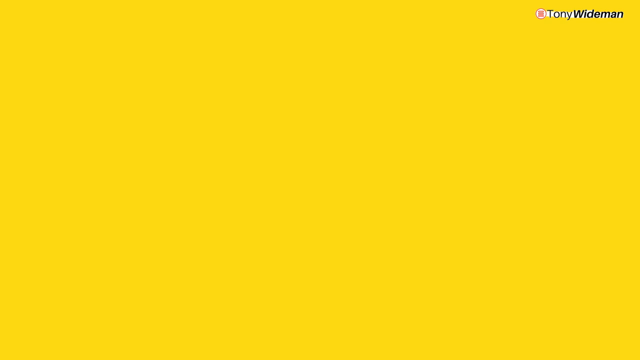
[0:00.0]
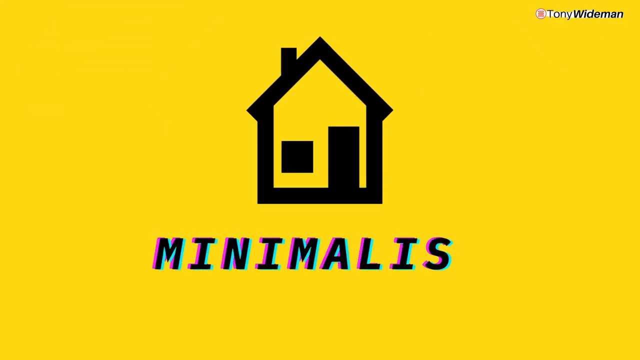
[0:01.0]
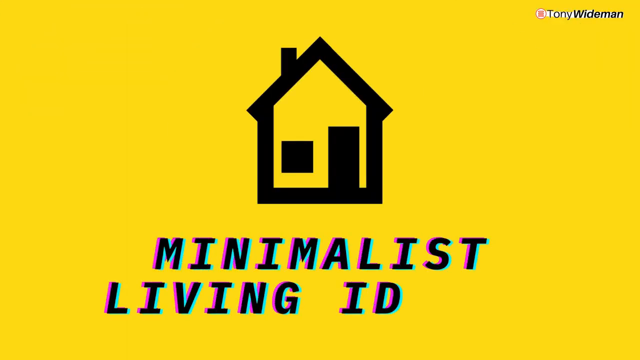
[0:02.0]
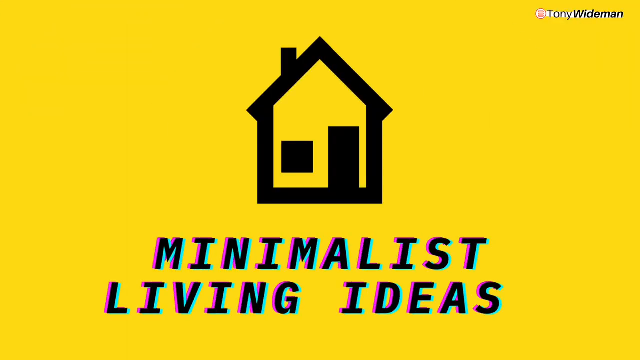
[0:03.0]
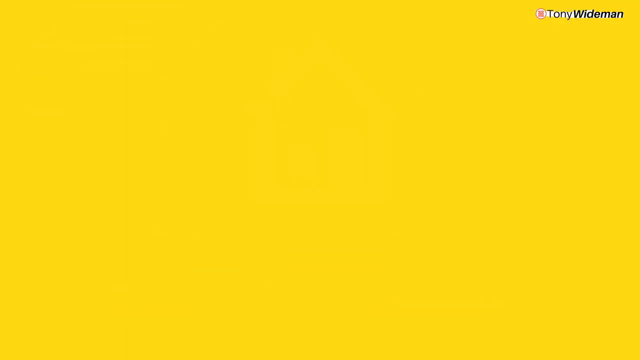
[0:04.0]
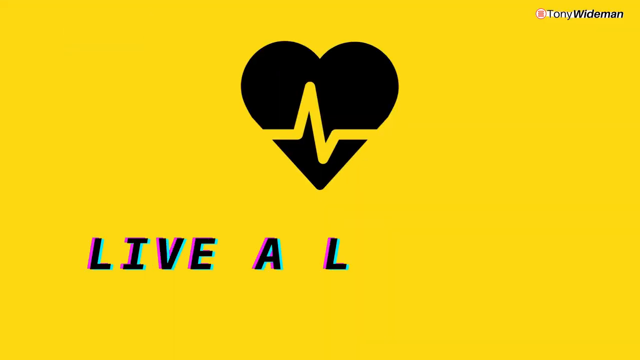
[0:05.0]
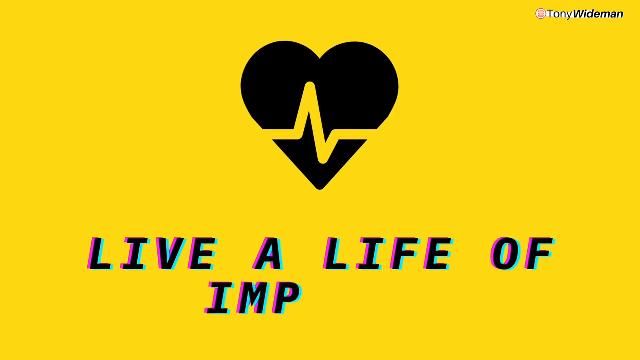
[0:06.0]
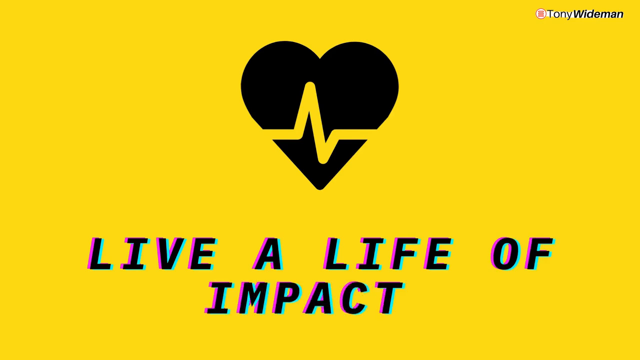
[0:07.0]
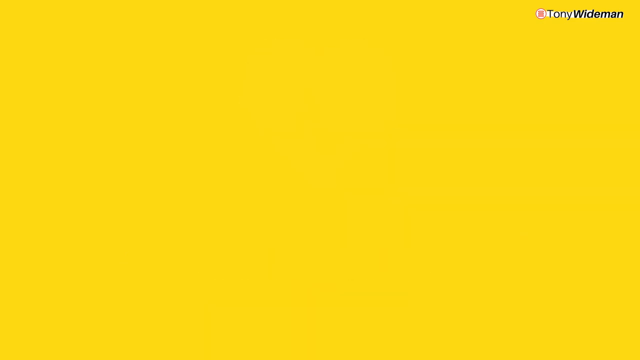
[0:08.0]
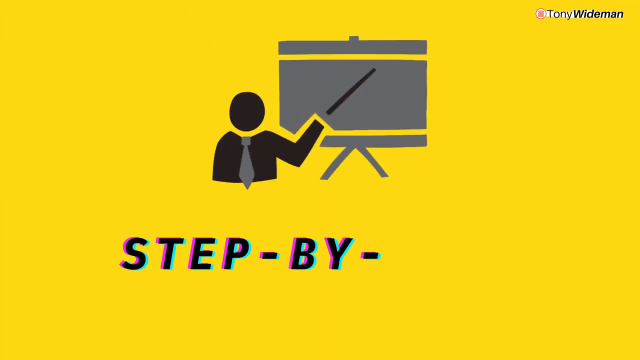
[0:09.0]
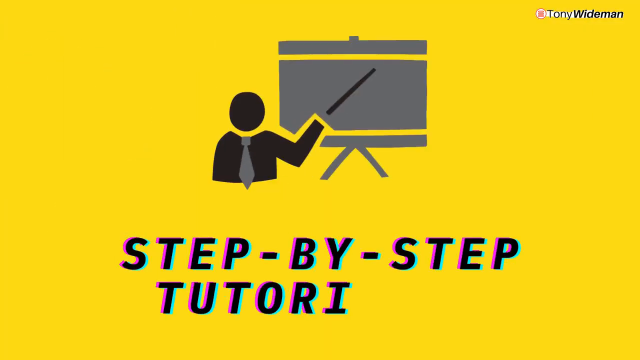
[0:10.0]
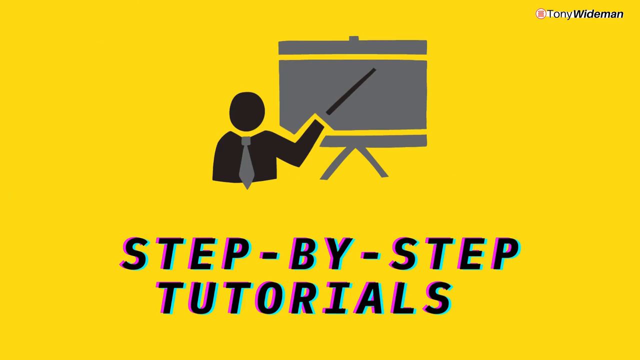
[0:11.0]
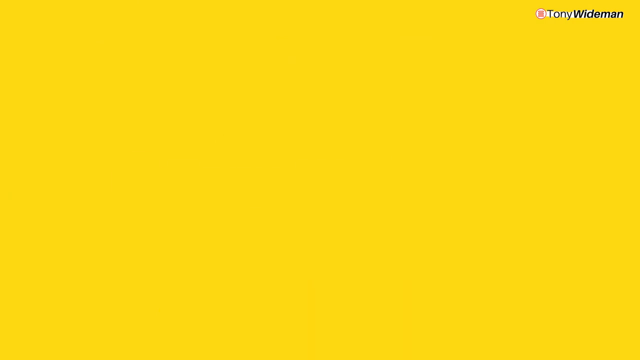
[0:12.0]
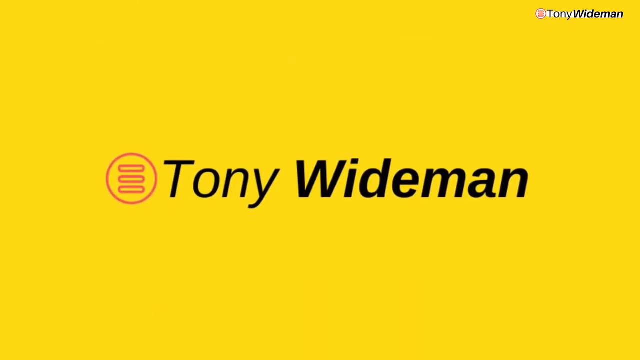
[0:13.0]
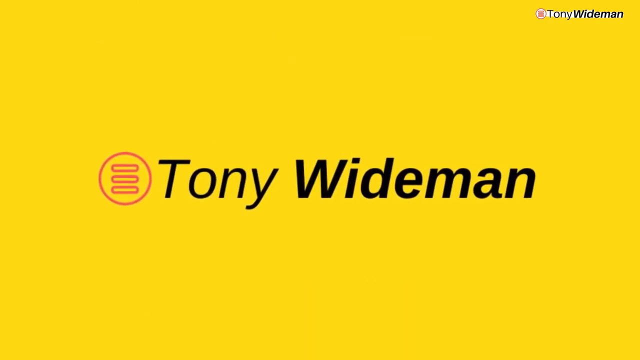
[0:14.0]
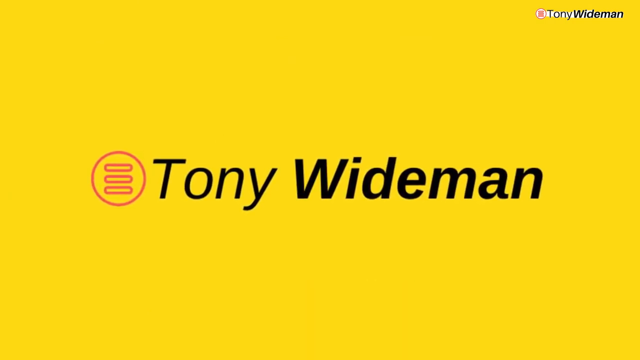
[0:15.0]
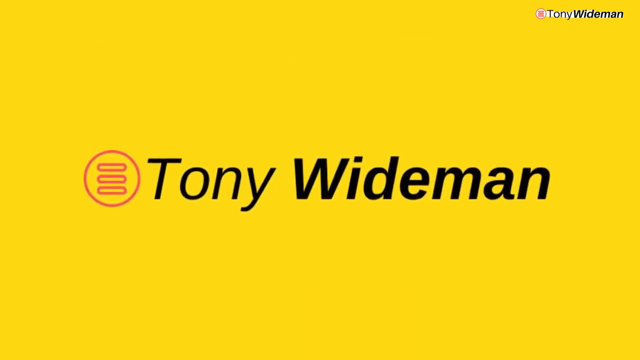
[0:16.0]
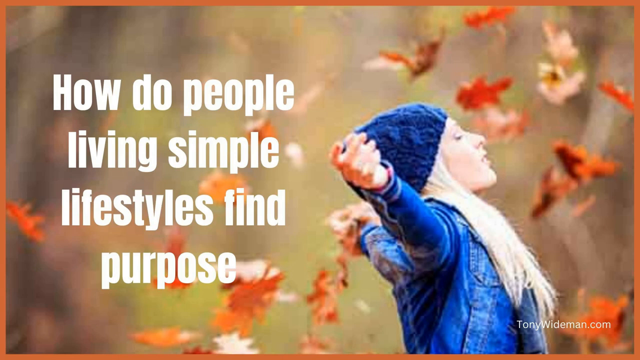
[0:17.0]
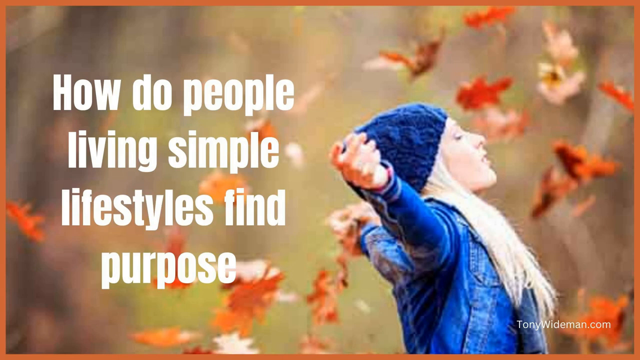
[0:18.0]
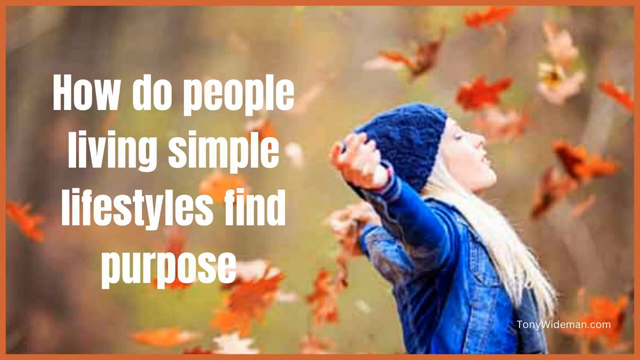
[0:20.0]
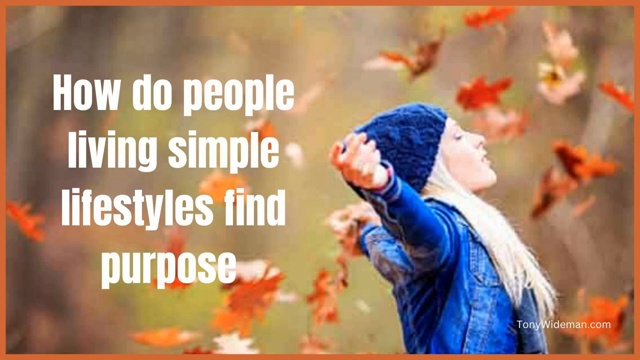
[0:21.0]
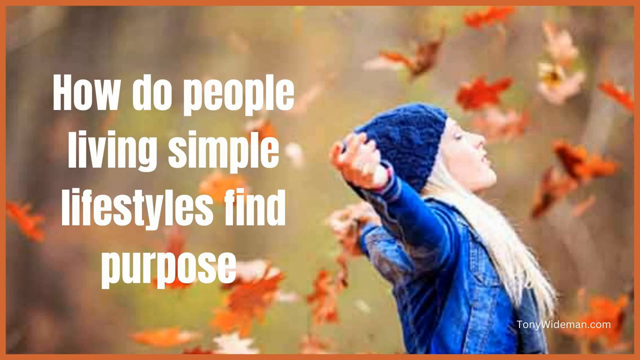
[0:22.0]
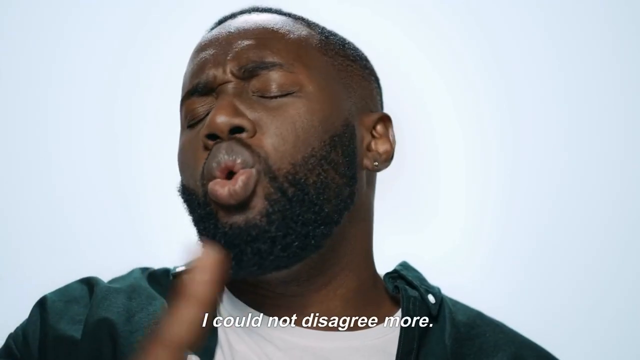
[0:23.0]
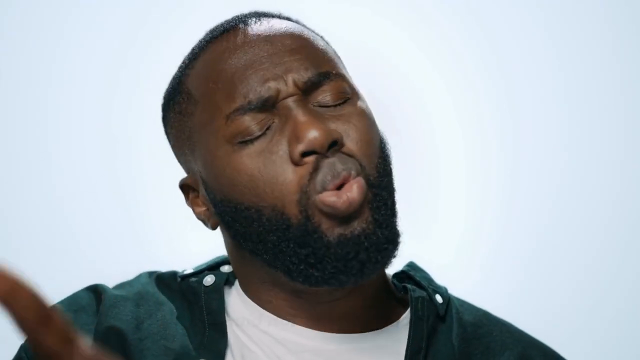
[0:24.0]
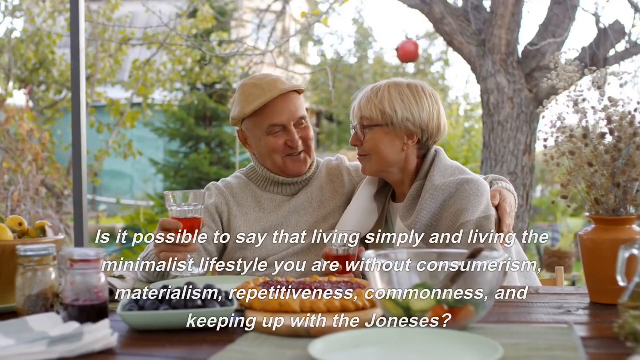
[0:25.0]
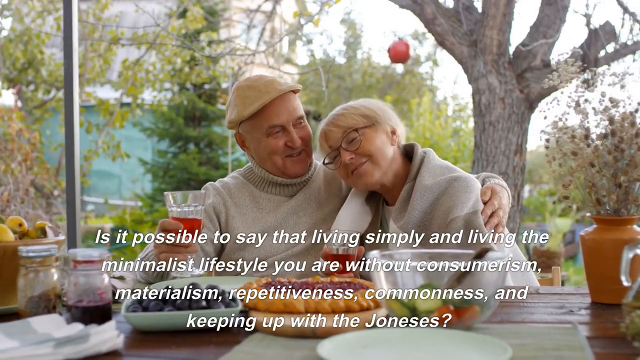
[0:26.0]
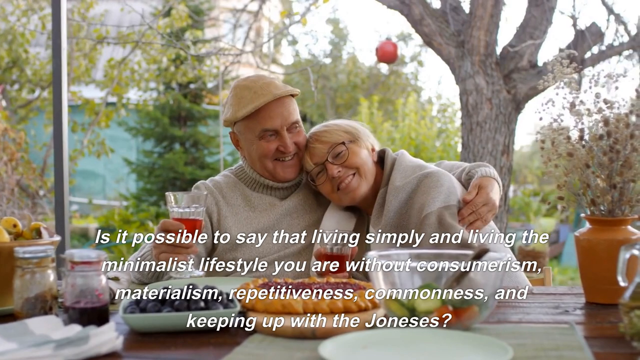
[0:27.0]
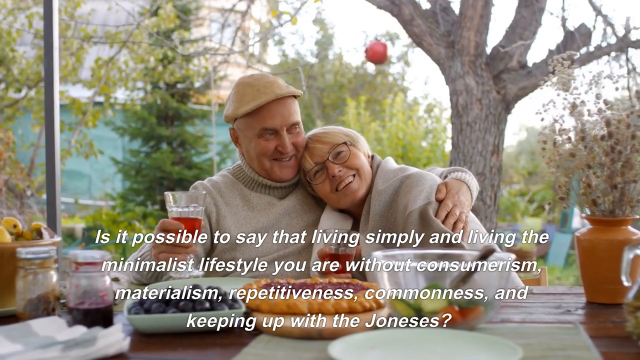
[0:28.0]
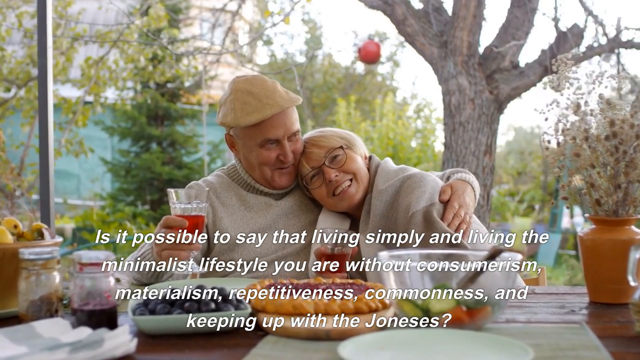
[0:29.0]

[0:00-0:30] The video is by Tony Weidman and is entitled "Minimalist Living Ideas." A simple image of a house on a yellow background appears. Text says the video is about "how to live a life of impact" with "step by step tutorials," with Tony Weidman providing the information. The question "how do people living simple lifestyles find purpose?" follows. A woman in blue, wearing a blue hat, is among autumn leaves. Next, a Black African American man shakes his head, the caption "I could not disagree more" appears, and he shakes his finger. An elderly couple is sitting outside with a spread of food: jams, fruits and fruit juices. The text reads: "is it possible to say that living simply and living the minimalist lifestyle you are, without consumerism, materialism, repetitiveness, commonness and keeping up with the Joneses?" The couple looks relaxed.